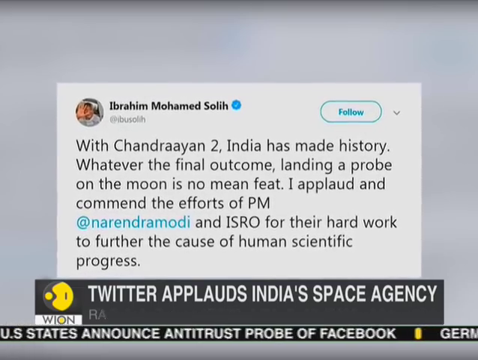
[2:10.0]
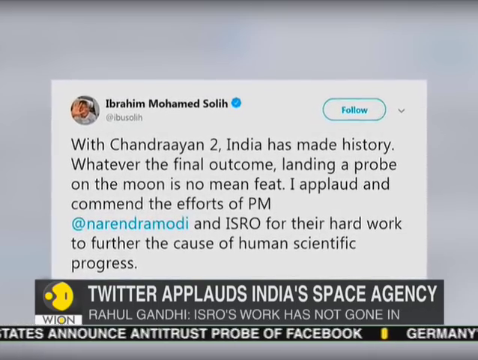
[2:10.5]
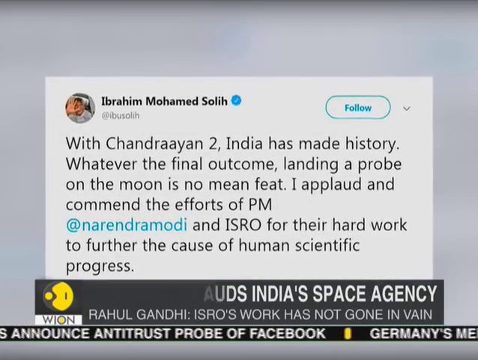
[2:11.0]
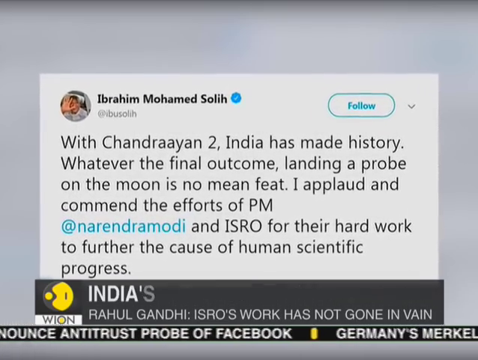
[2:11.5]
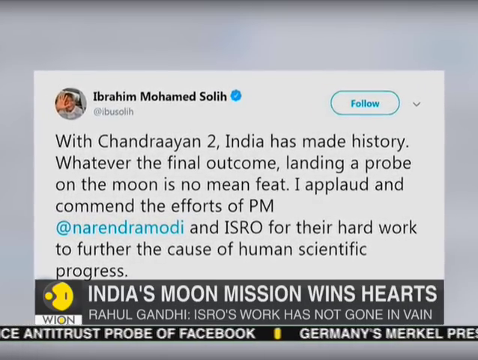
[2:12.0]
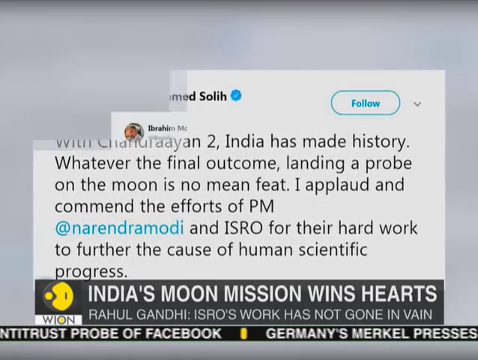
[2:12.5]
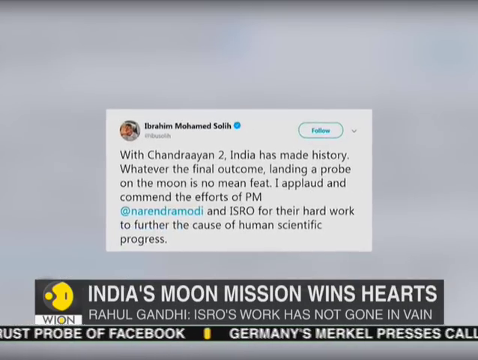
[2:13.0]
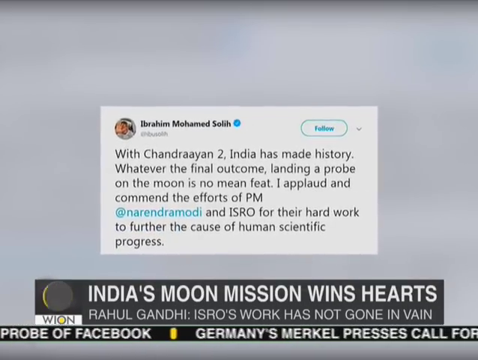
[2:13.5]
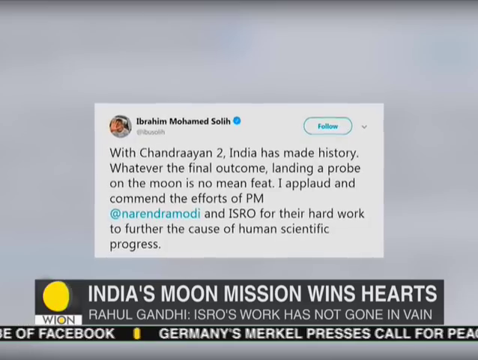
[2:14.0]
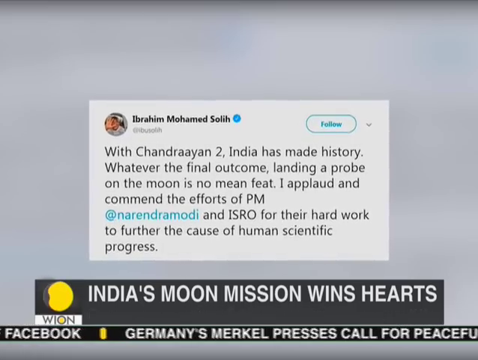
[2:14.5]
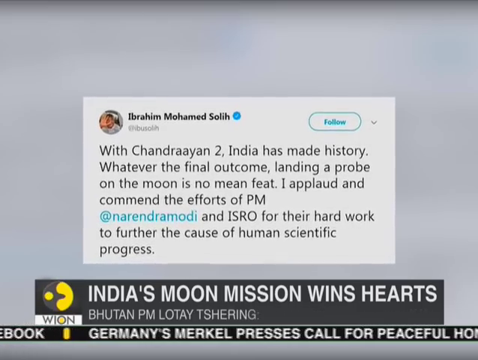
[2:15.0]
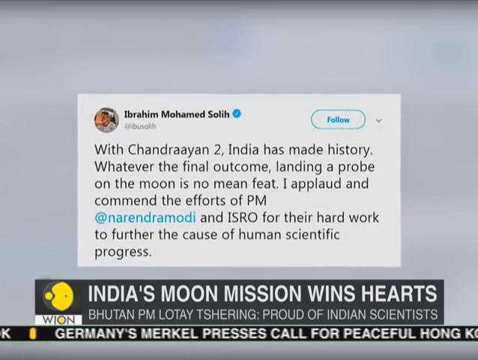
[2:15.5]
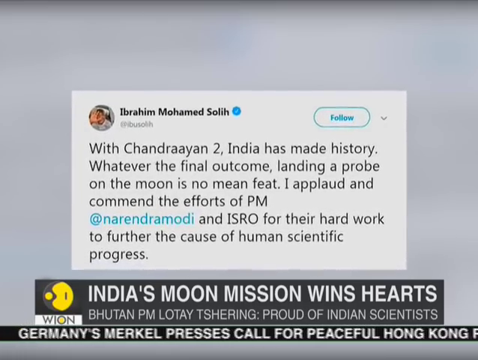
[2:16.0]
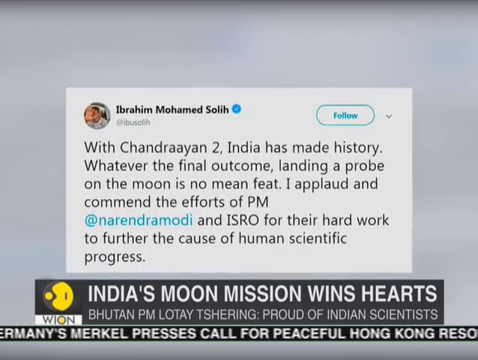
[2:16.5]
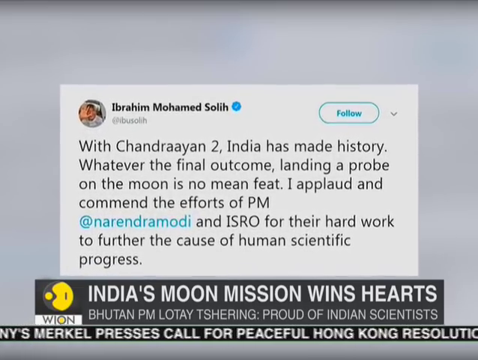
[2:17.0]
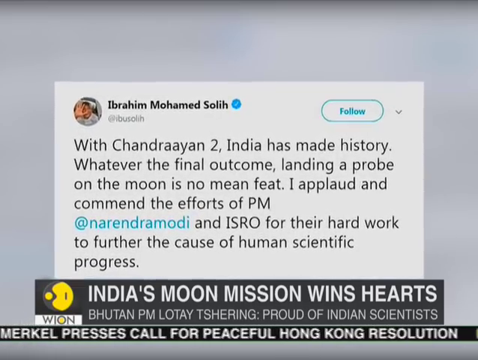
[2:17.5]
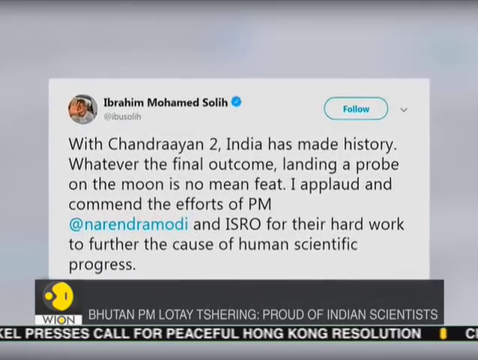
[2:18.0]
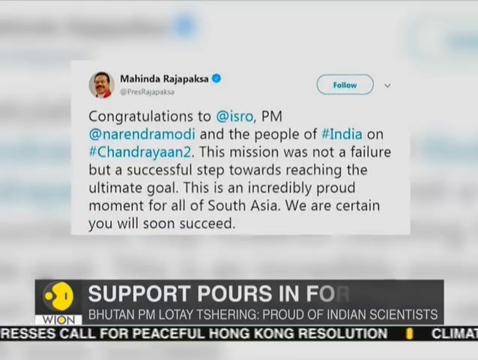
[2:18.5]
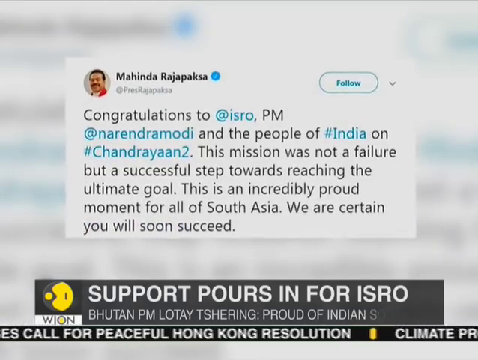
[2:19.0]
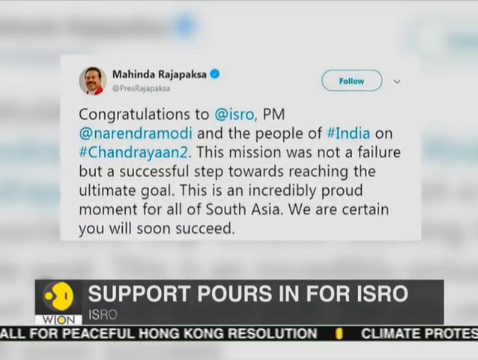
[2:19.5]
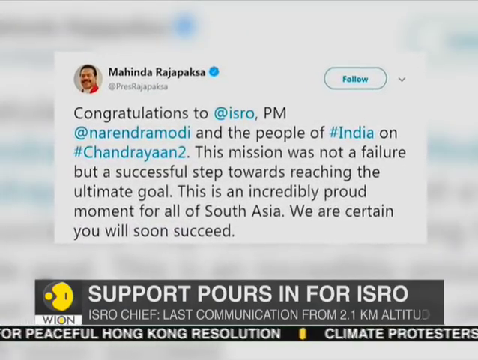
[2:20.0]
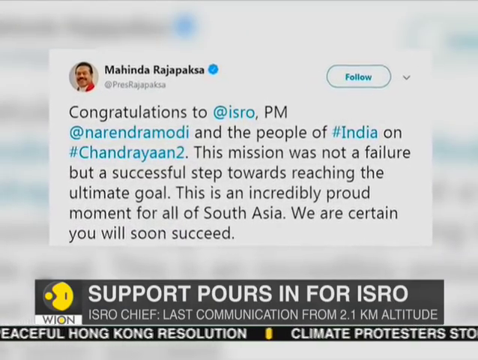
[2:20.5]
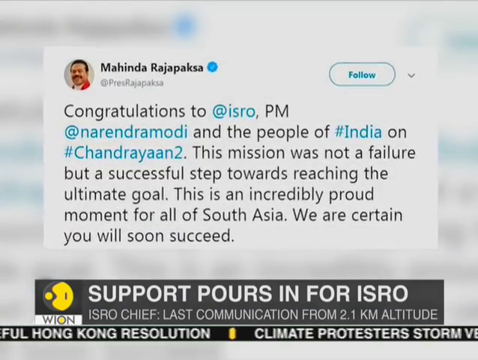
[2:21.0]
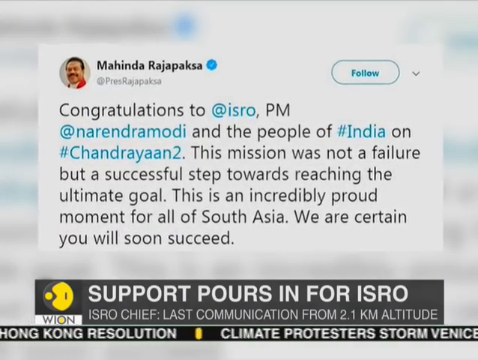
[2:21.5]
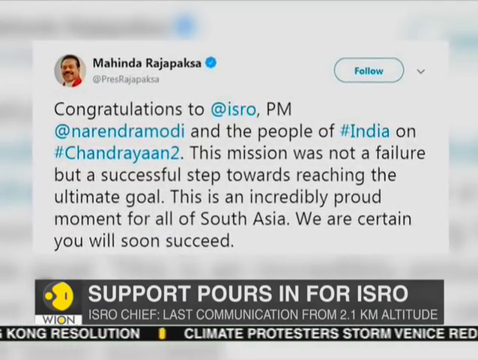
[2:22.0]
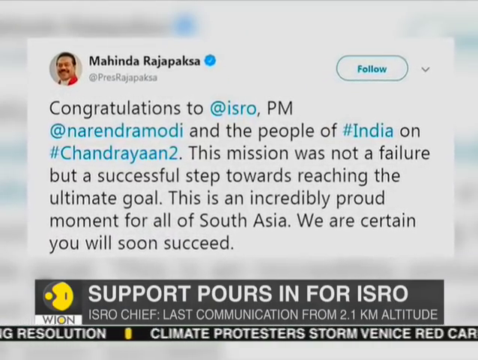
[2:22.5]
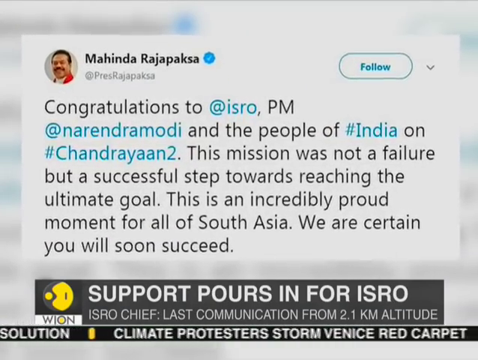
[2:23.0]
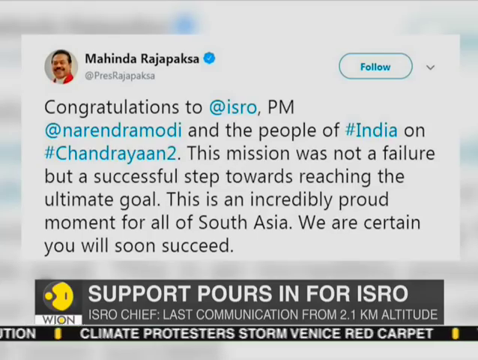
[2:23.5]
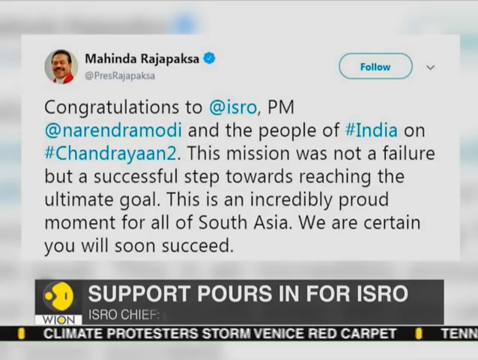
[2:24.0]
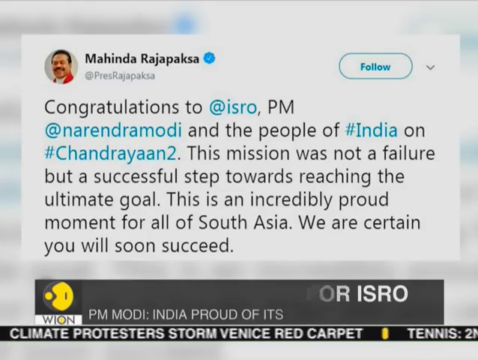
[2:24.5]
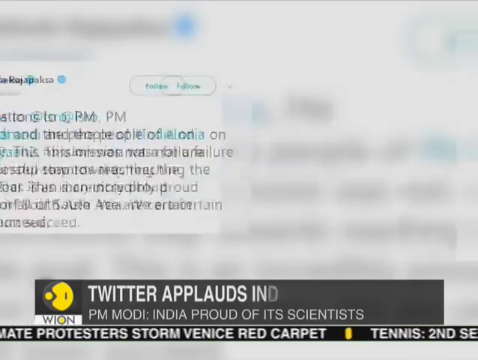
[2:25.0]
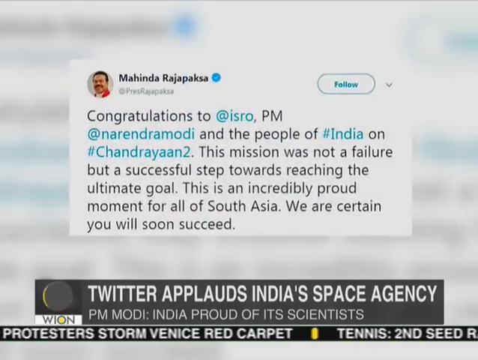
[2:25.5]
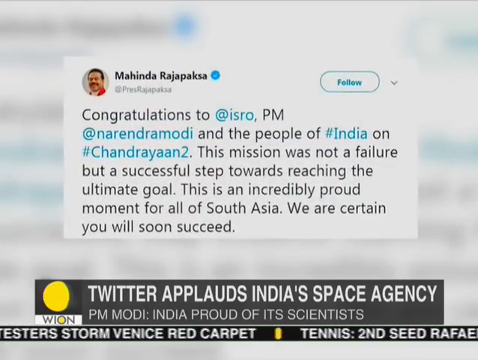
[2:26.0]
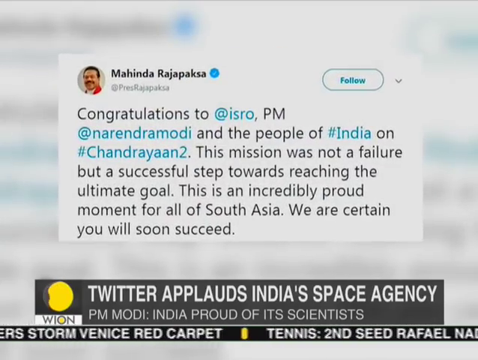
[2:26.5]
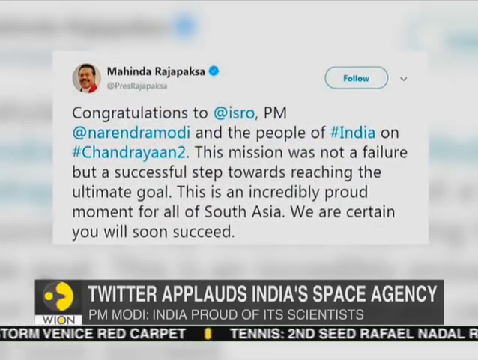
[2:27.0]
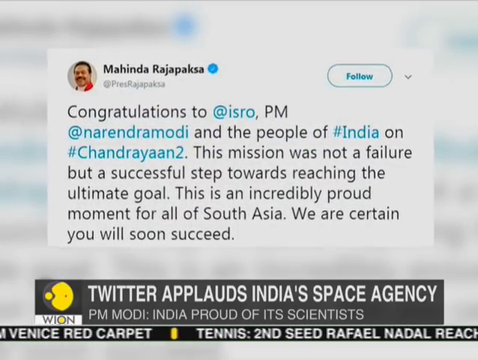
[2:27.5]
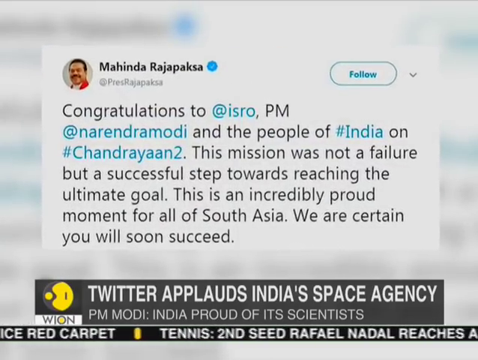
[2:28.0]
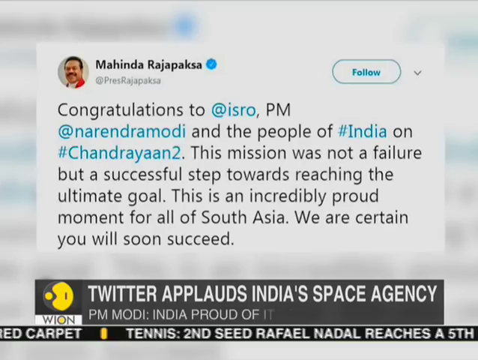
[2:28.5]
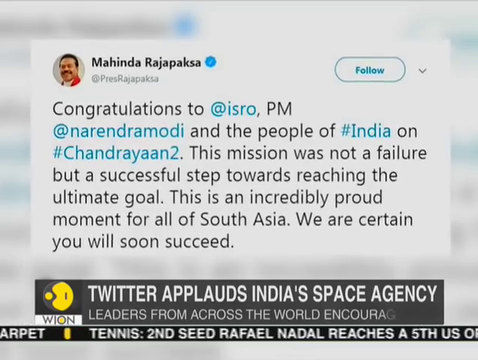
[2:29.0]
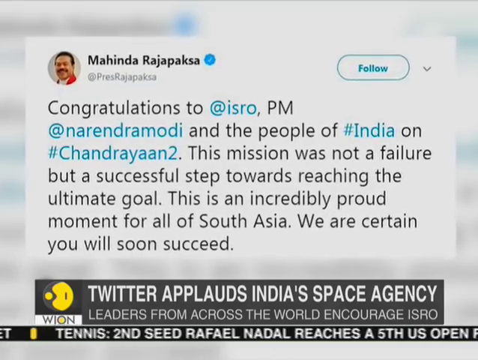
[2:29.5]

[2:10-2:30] The WION (World is One) News report on the Chandrayaan-2 spacecraft shows tweets of support. The tweet from Ibrahim Mohamed Soli reads: "With Chandrayaan-2 India has made history. Whatever the final outcome, landing a probe on the moon is no mean feat. I applaud and commend the efforts of PM at Narendra Modi and ISRO for their hard work to further the cause of human scientific progress." The banner at the bottom reads "India's moon mission wins hearts" and "Rahul Gandhi: ISRO's work has not gone in vain". The same tweet from Ibrahim is shown again. A tweet from Mahindra Raja Paksha follows: "Congratulations to ISRO, PM at Narendra Modi and the people of #India on the #Chandrayaan-2. The mission was not a failure, but a successful step towards reaching the ultimate goal. This is an incredibly proud moment for all of South Asia. We are certain you will soon succeed." Text then reads "support pours in" and "Twitter applauds India's".